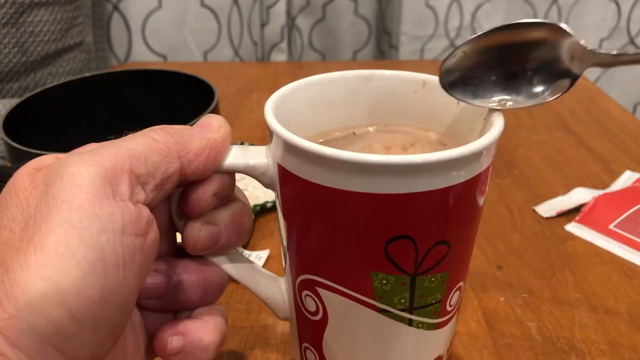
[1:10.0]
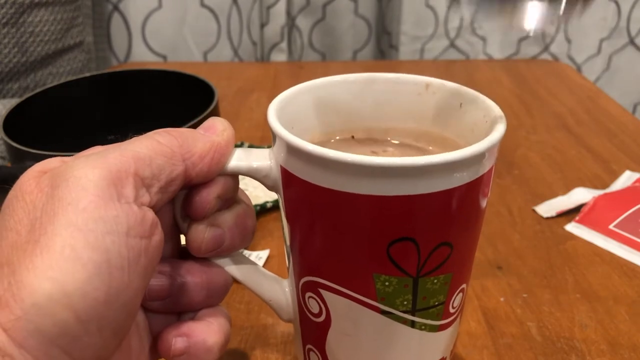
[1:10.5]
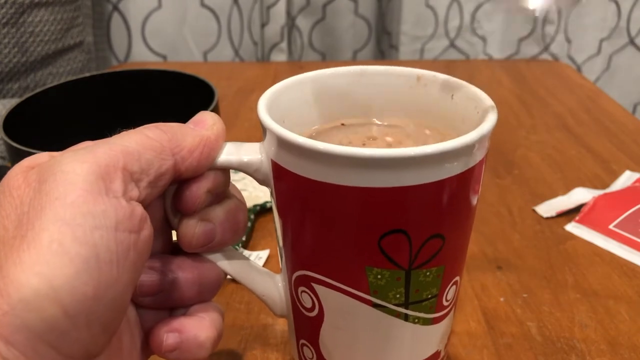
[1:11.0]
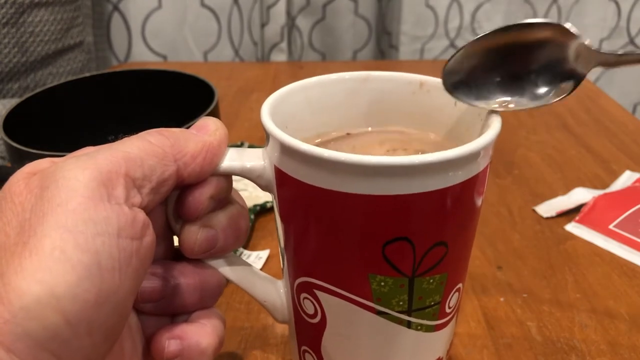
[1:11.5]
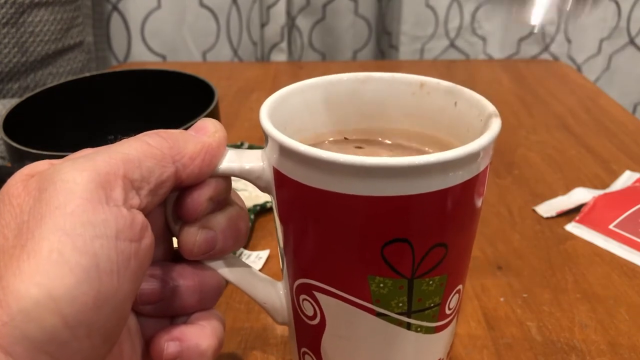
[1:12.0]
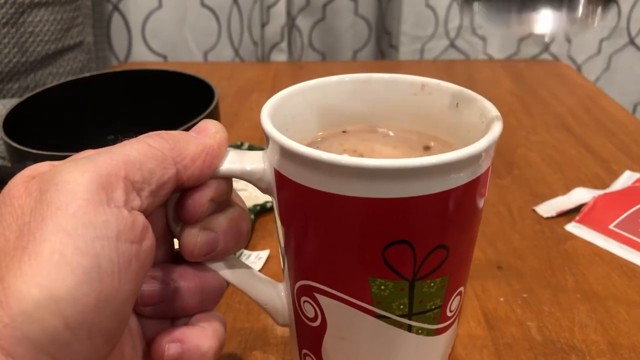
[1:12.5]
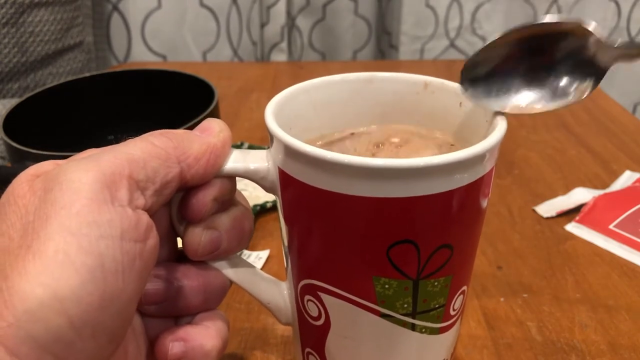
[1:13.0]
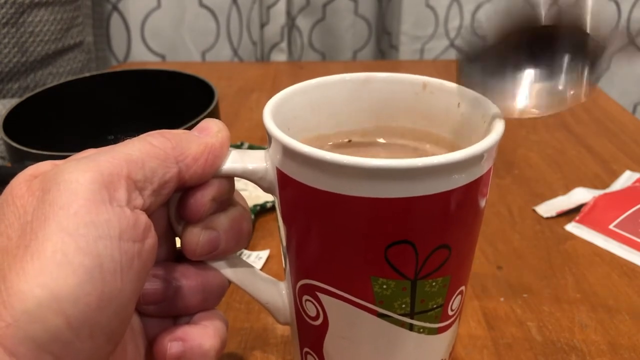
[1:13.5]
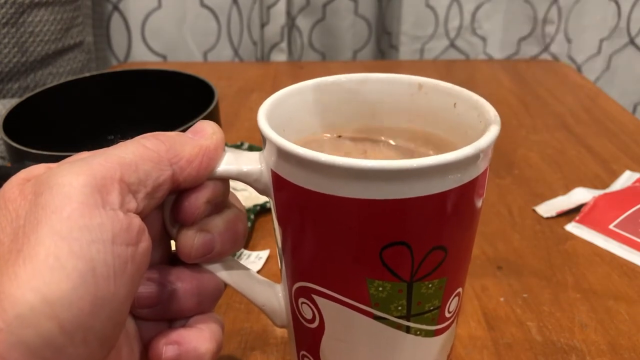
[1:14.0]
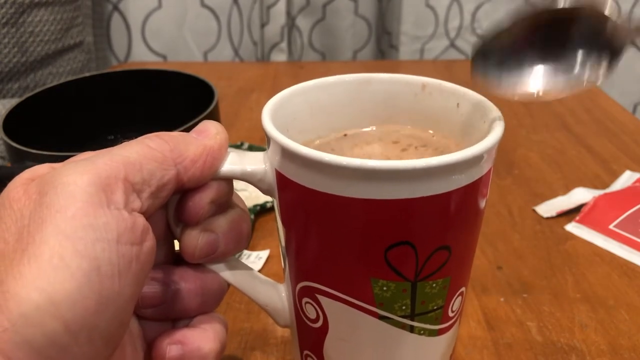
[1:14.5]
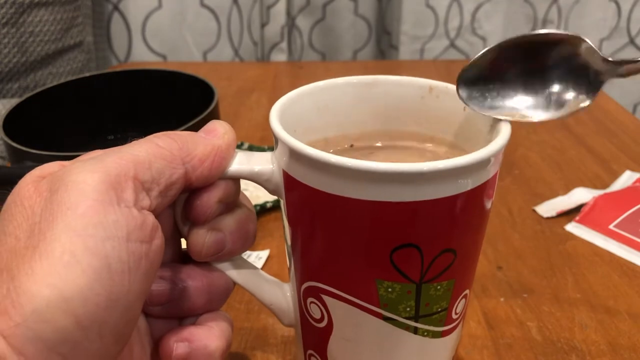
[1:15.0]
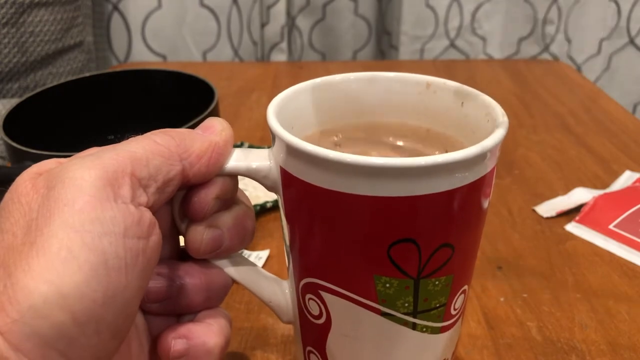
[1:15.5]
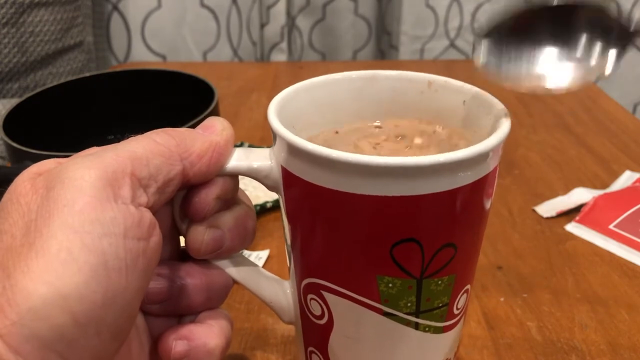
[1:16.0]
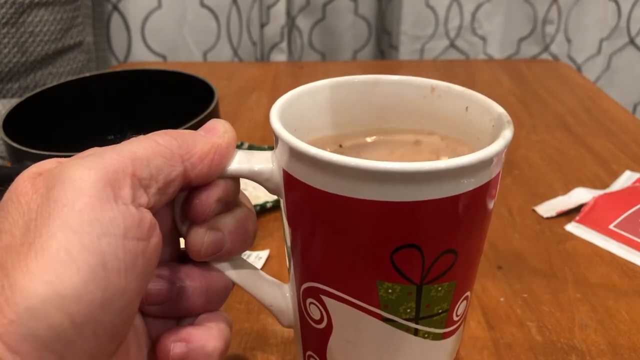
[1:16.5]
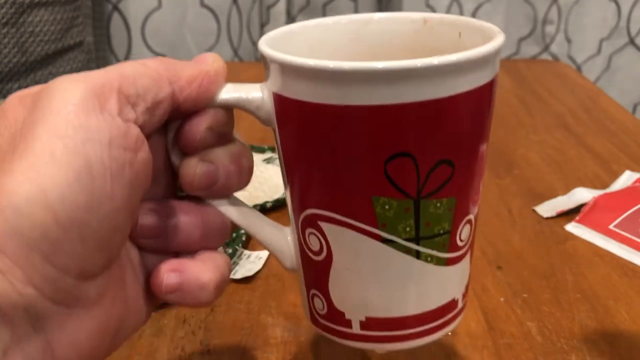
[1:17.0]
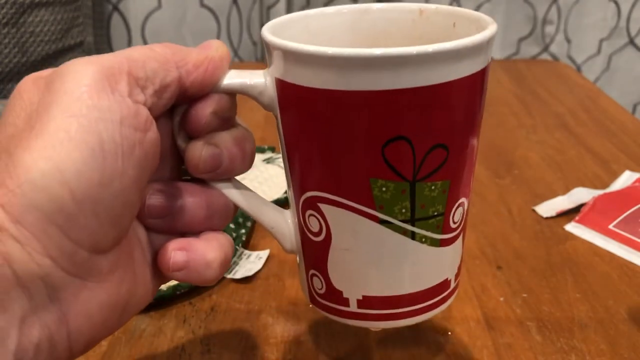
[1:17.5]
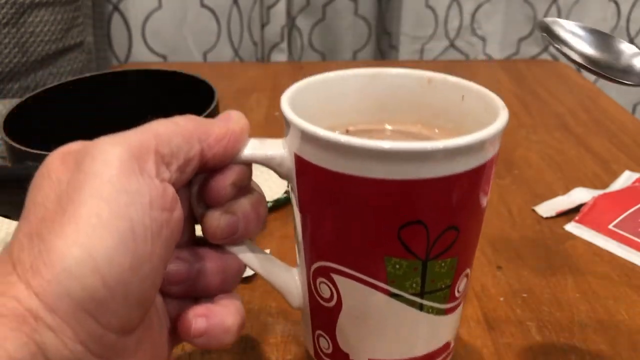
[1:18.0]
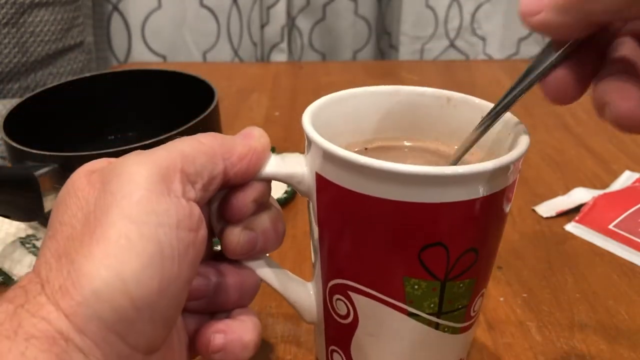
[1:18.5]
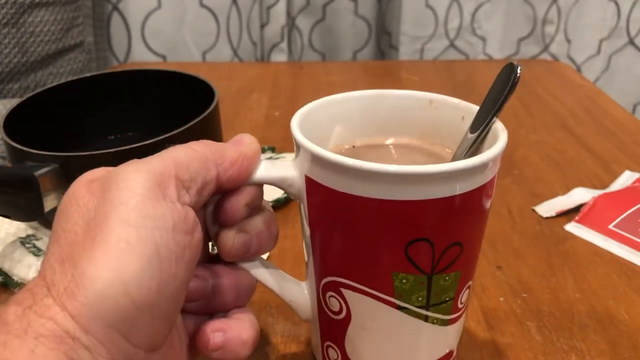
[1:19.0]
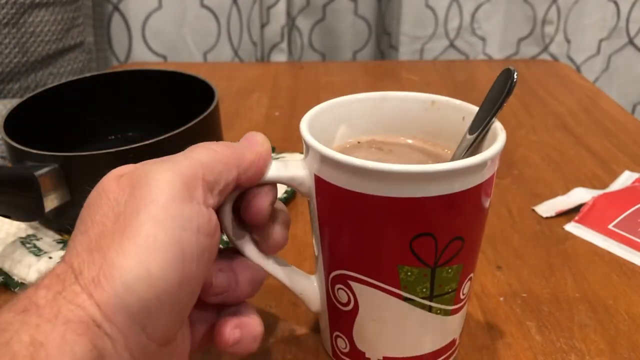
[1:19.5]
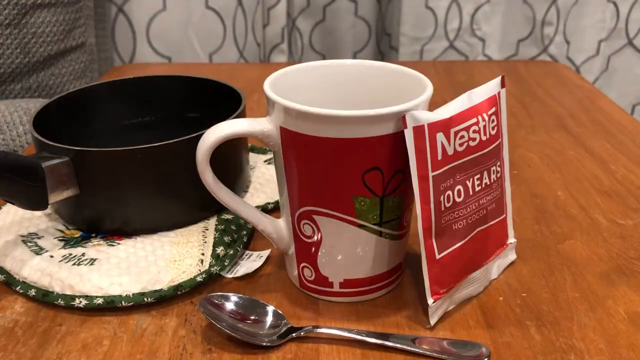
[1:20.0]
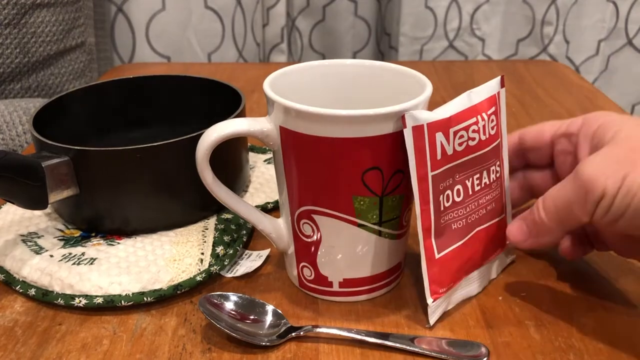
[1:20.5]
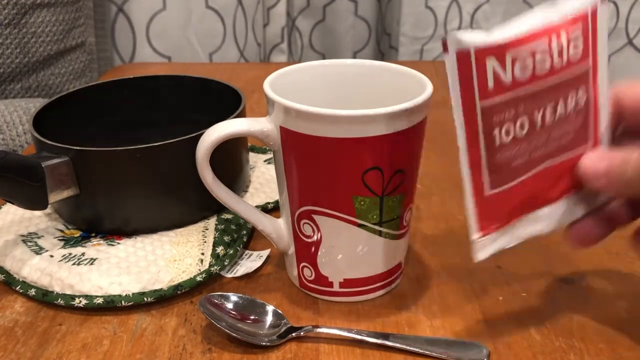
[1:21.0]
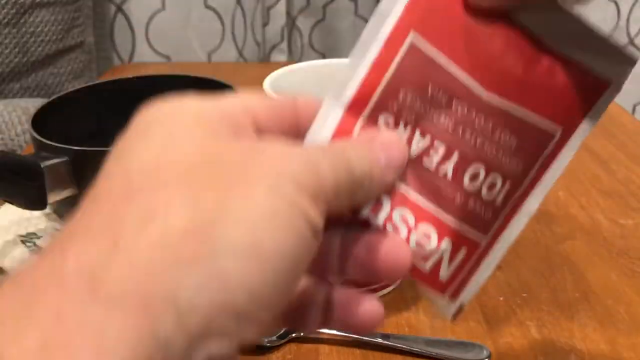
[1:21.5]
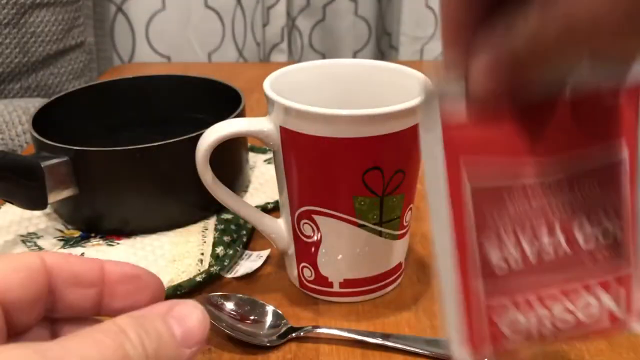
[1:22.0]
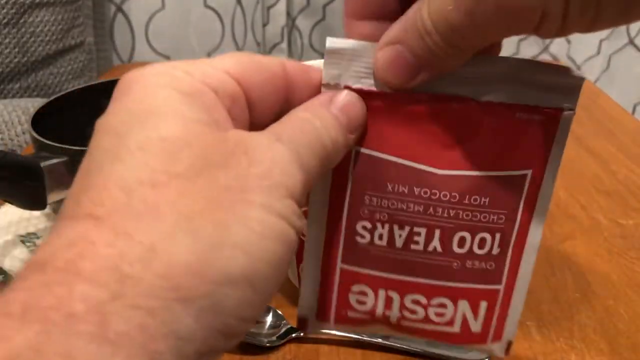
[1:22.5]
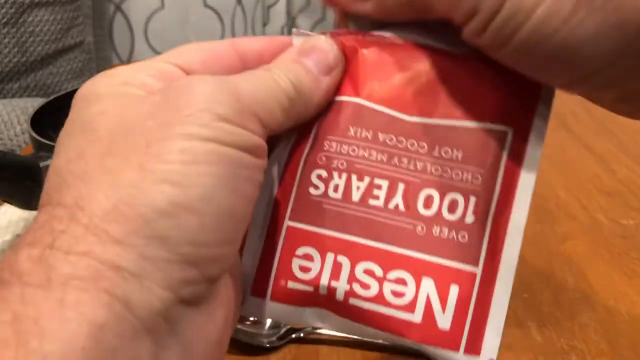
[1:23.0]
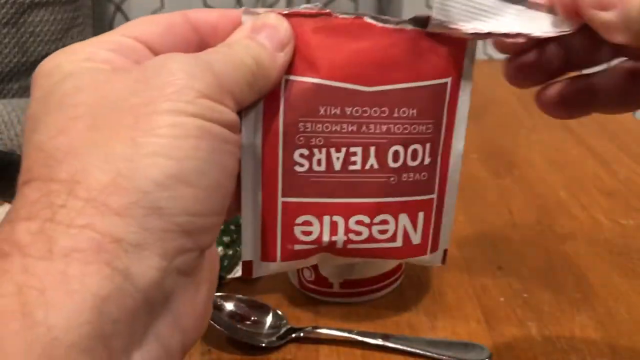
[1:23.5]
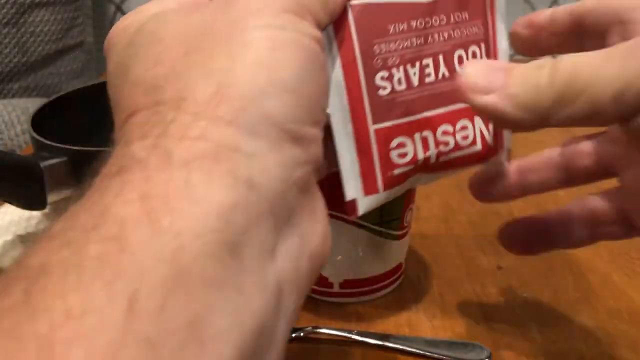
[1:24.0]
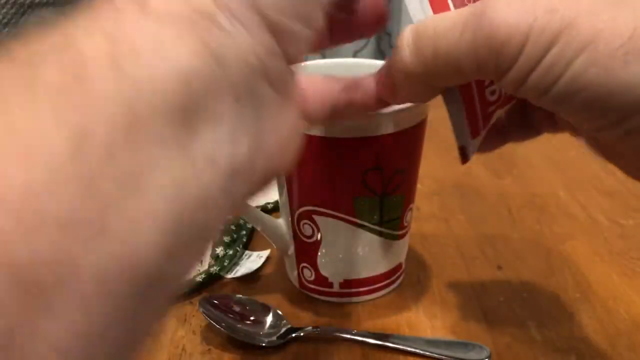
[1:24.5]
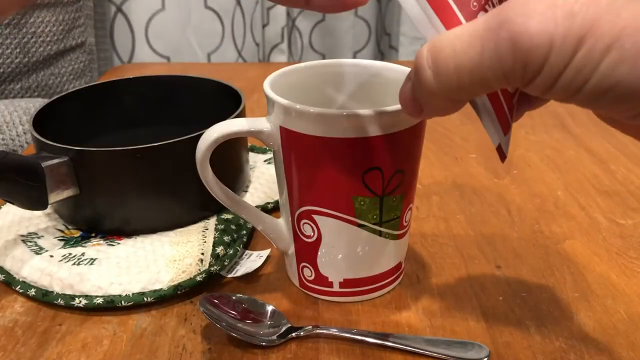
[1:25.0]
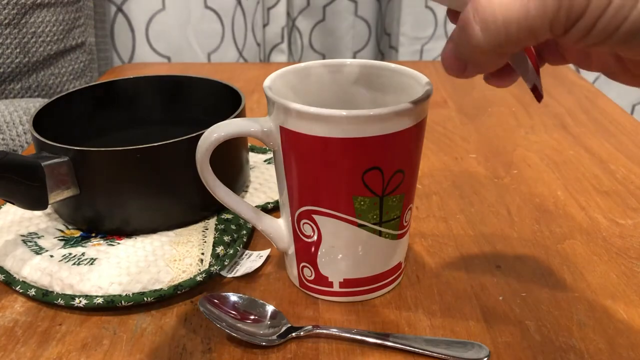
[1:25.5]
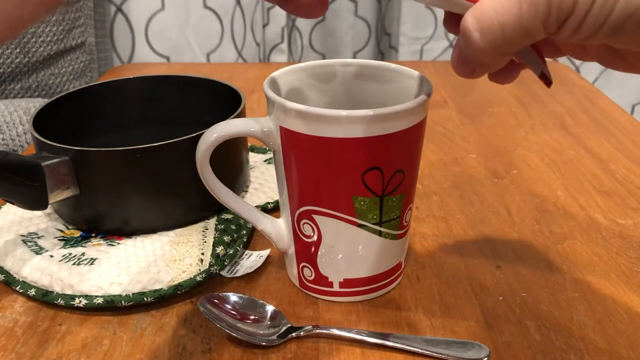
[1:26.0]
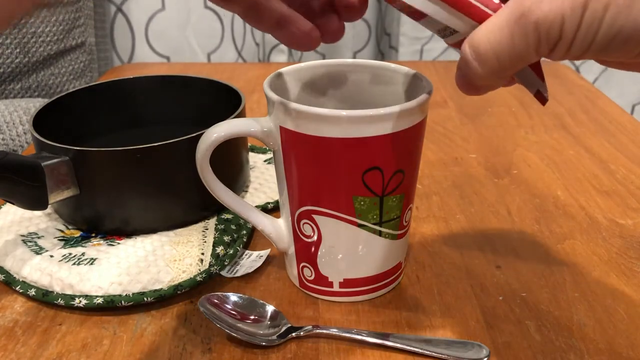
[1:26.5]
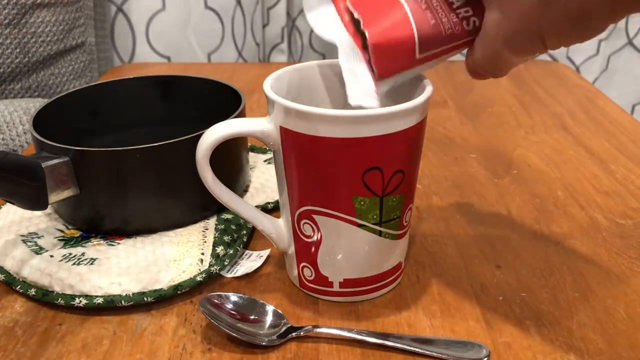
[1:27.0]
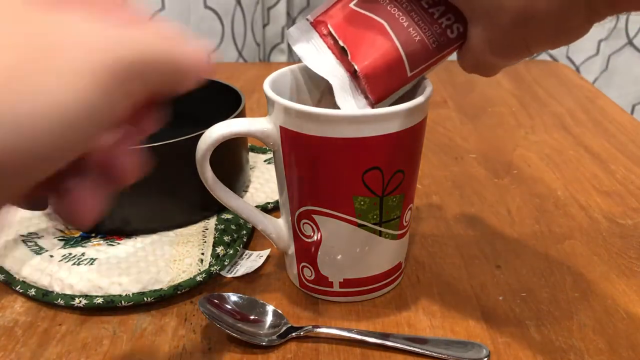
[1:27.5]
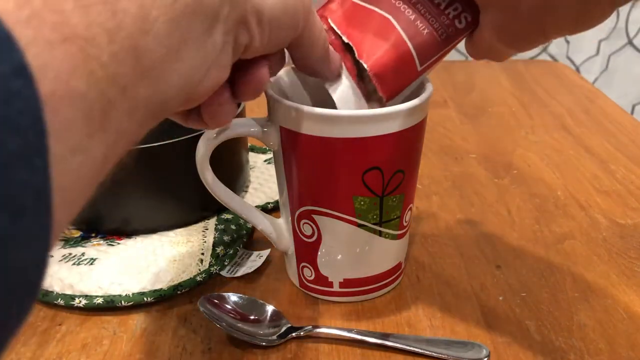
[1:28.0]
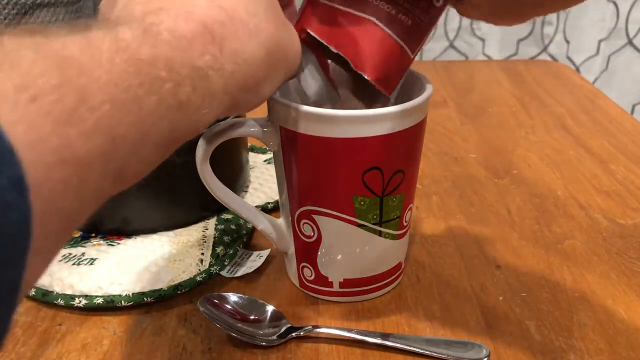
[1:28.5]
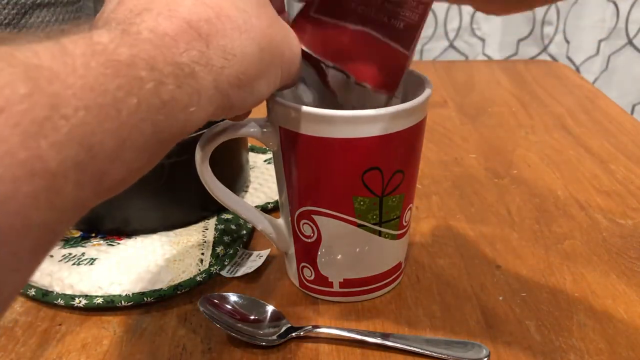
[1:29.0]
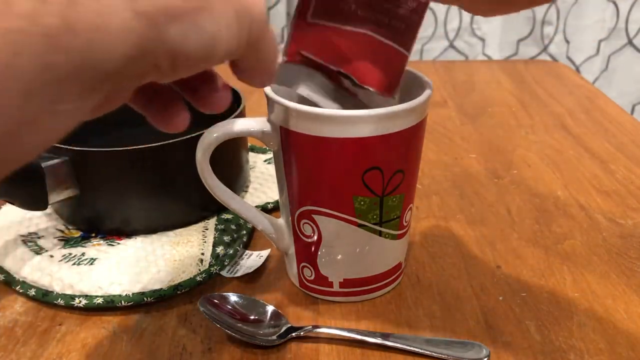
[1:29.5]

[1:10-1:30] The person hits the edge of the cup with the edge of the spoon about 15 times, puts the spoon back into the hot chocolate, and sets the cup down. The video then goes back to the beginning of the process: the person picks up the packet, shakes it a little so the contents settle toward the bottom, tears off the top strip, and pours the mix into the cup. This does not appear to be a second video but a duplicate of how the video first started. The table is very small and looks like it might be a side table or end table. To the left is a kind of cushiony fabric, possibly a couch, and in the background are white curtains with gray designs embroidered on them.